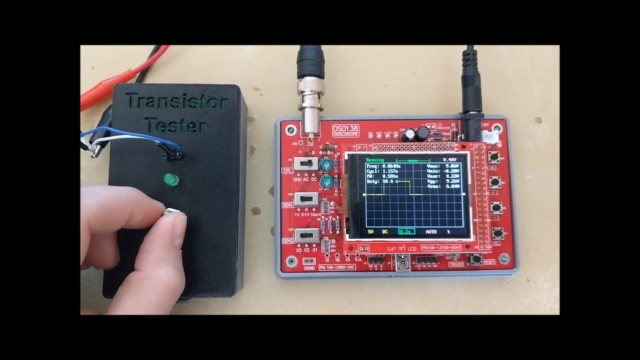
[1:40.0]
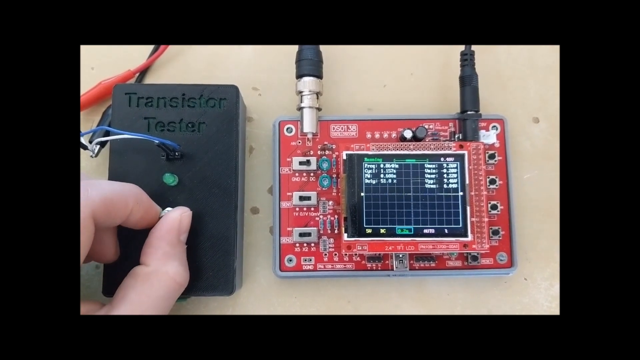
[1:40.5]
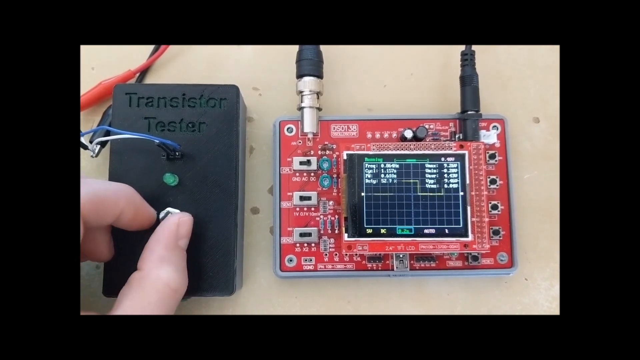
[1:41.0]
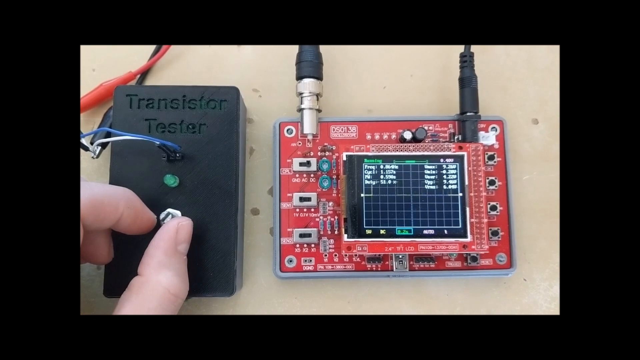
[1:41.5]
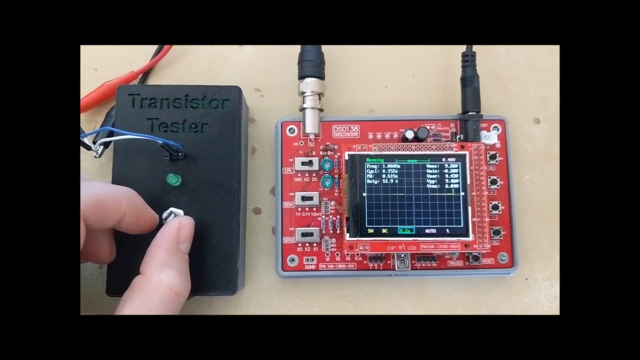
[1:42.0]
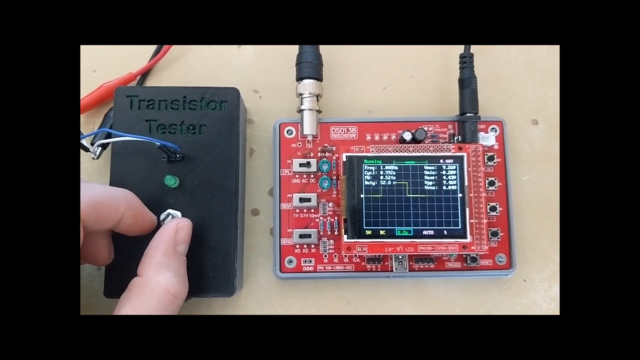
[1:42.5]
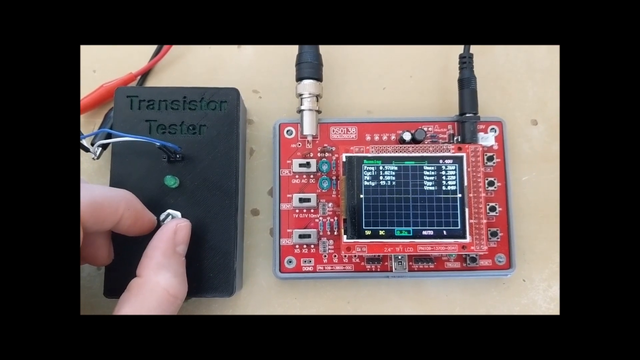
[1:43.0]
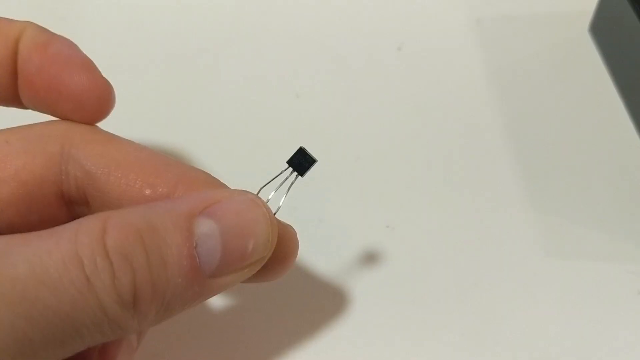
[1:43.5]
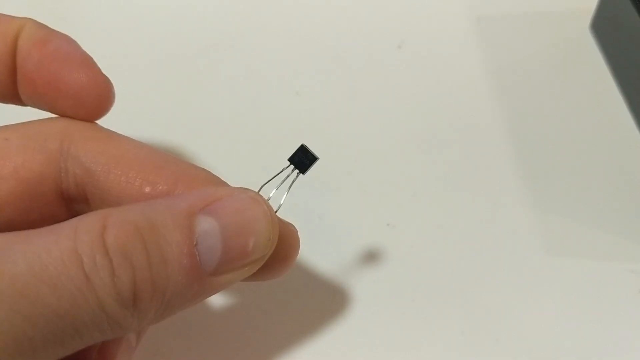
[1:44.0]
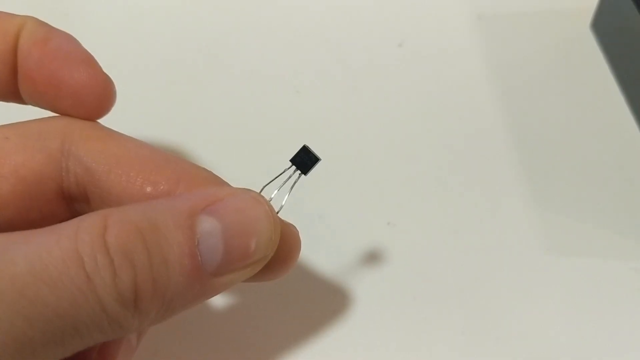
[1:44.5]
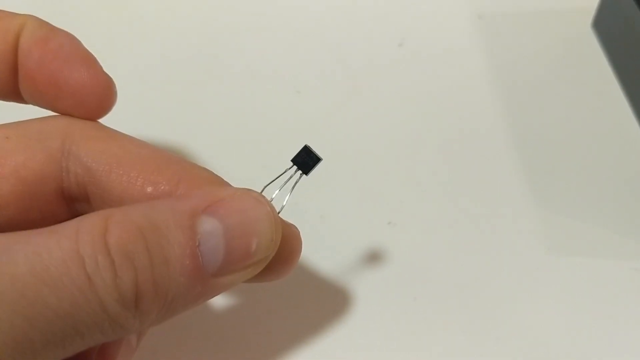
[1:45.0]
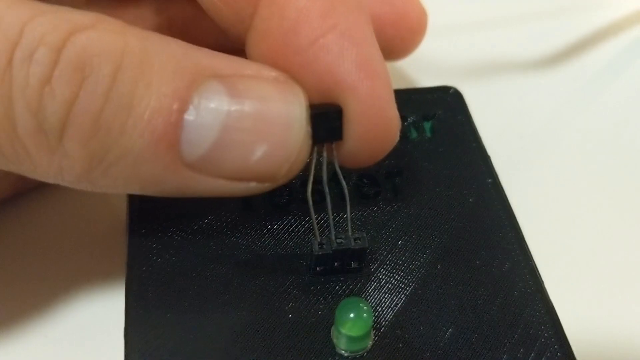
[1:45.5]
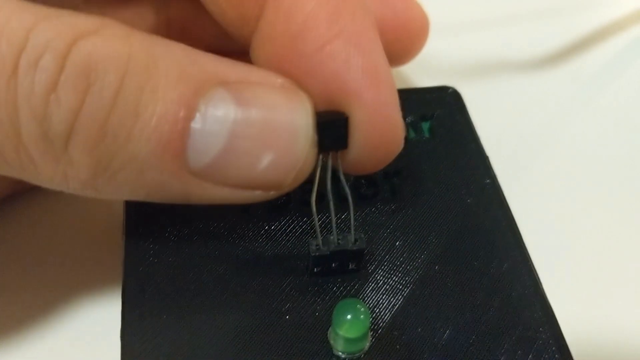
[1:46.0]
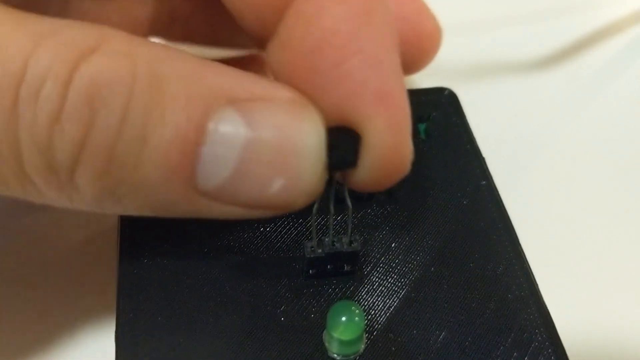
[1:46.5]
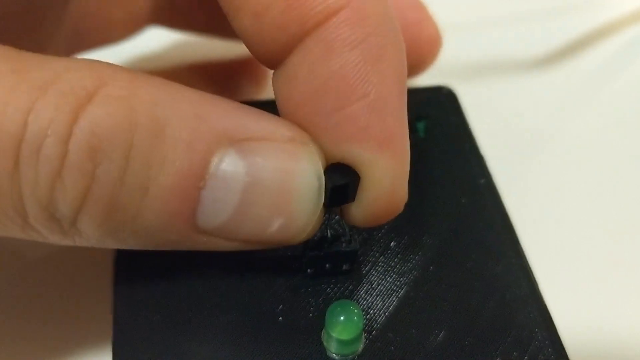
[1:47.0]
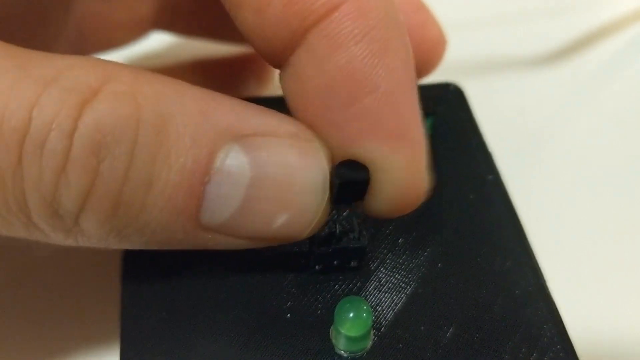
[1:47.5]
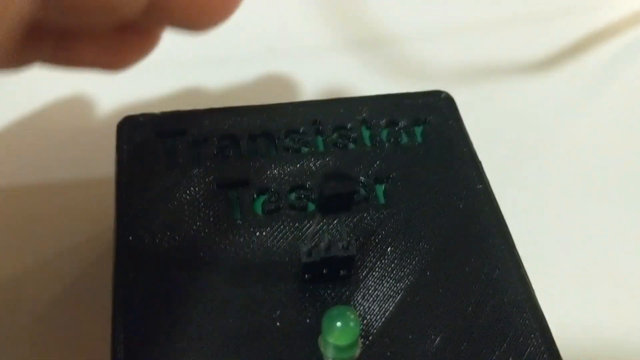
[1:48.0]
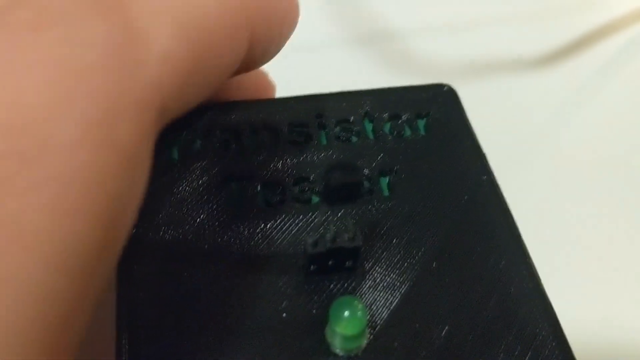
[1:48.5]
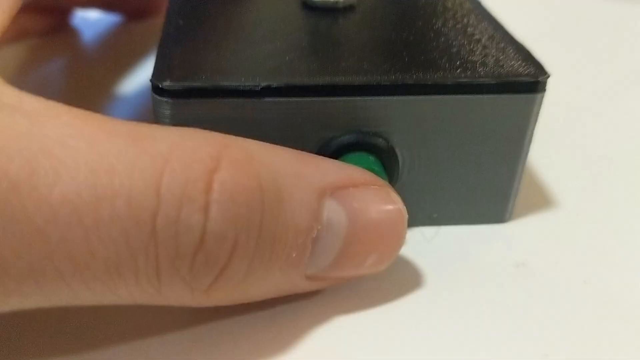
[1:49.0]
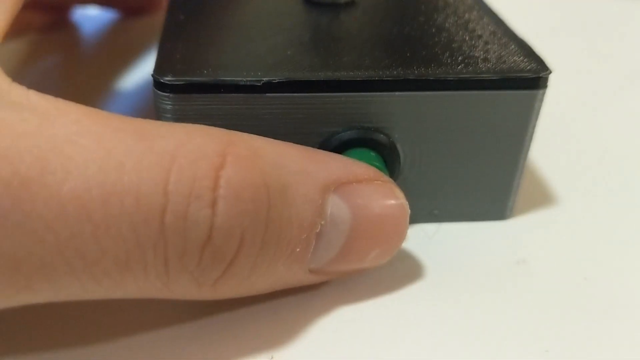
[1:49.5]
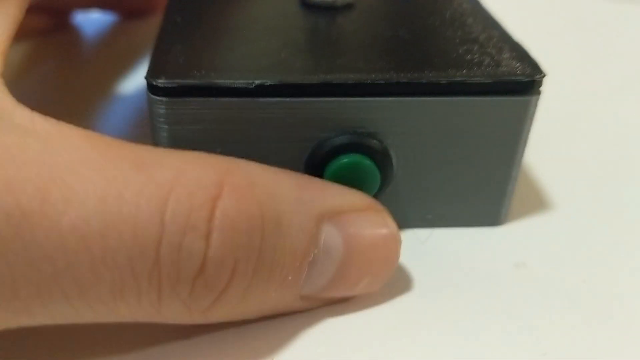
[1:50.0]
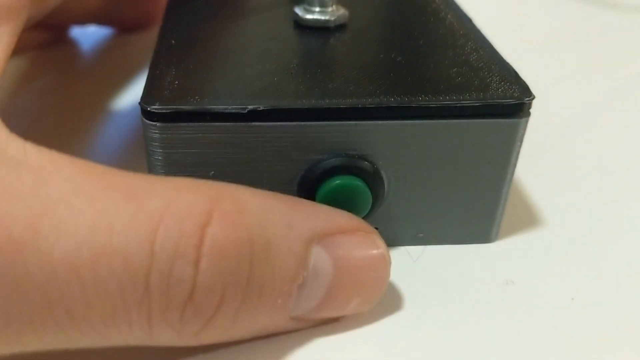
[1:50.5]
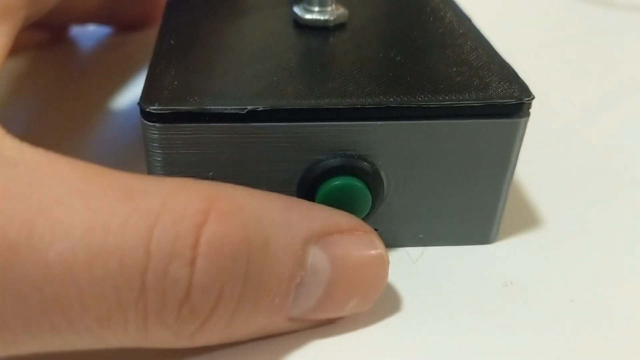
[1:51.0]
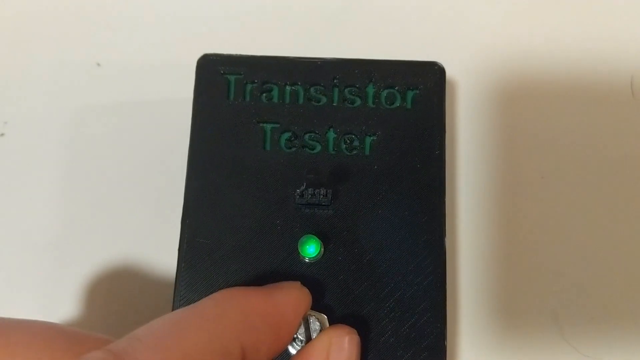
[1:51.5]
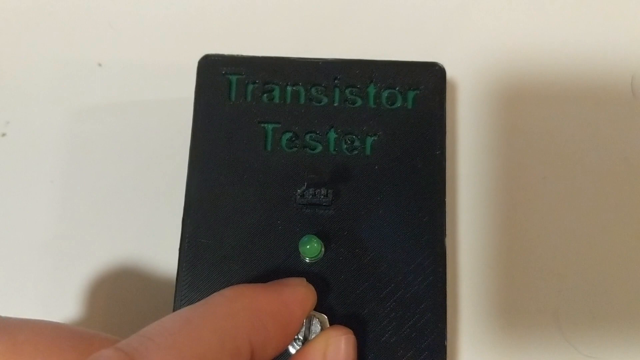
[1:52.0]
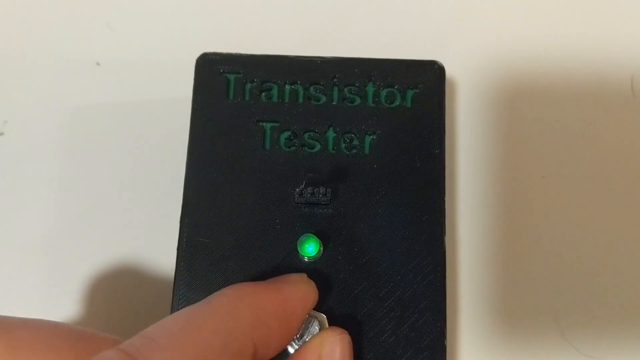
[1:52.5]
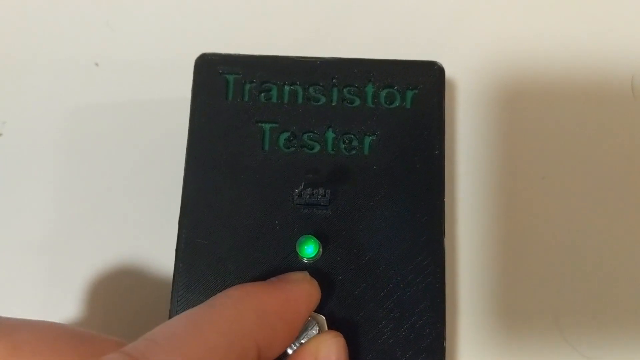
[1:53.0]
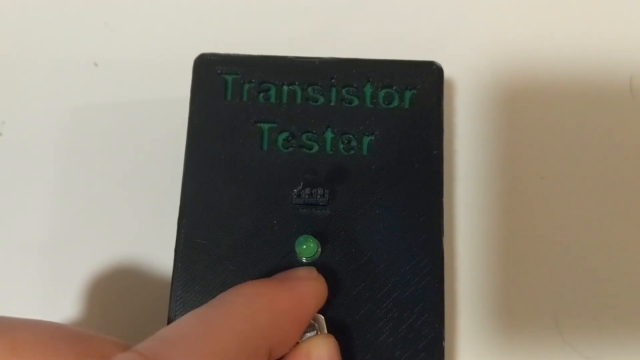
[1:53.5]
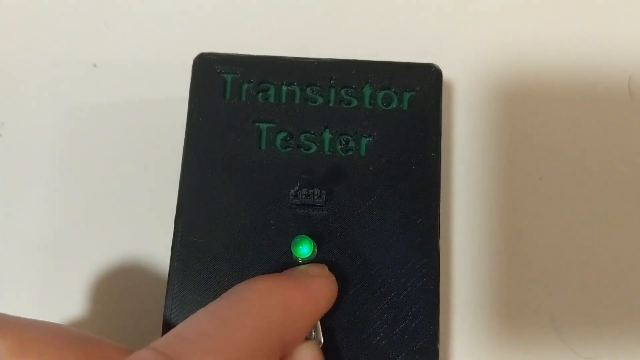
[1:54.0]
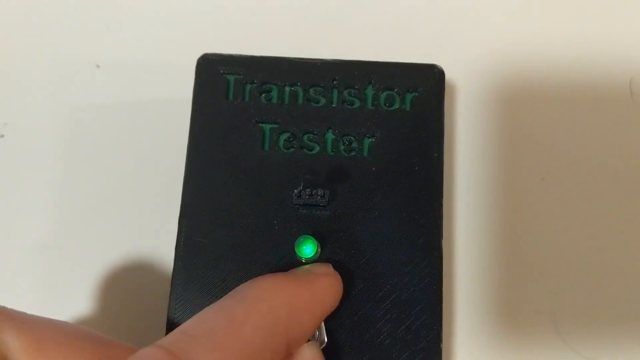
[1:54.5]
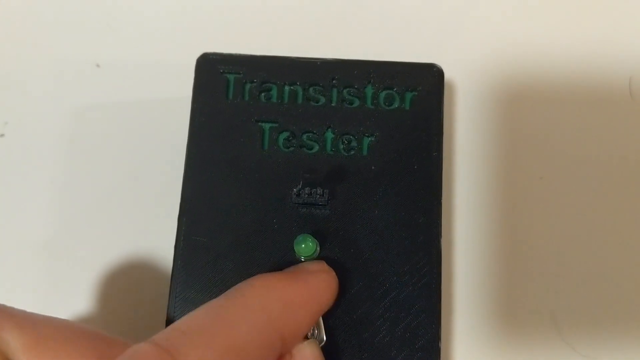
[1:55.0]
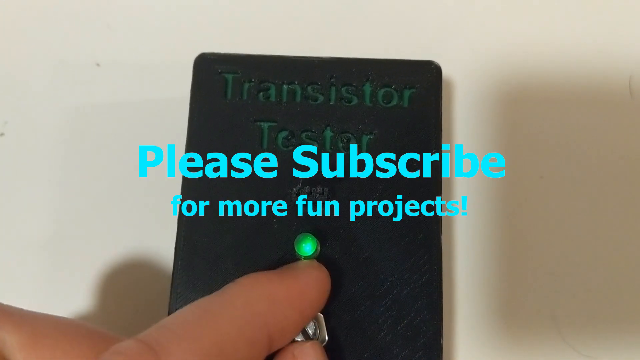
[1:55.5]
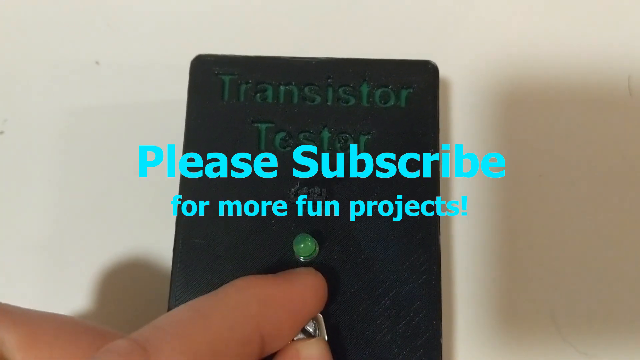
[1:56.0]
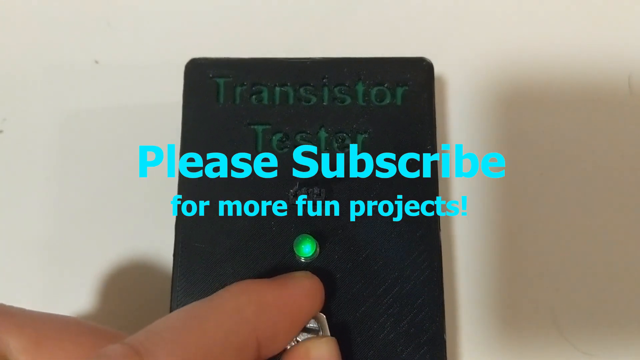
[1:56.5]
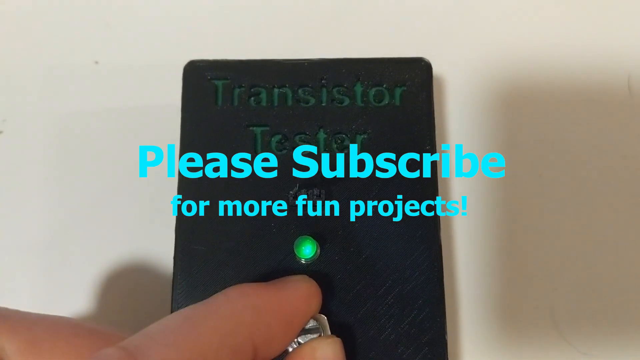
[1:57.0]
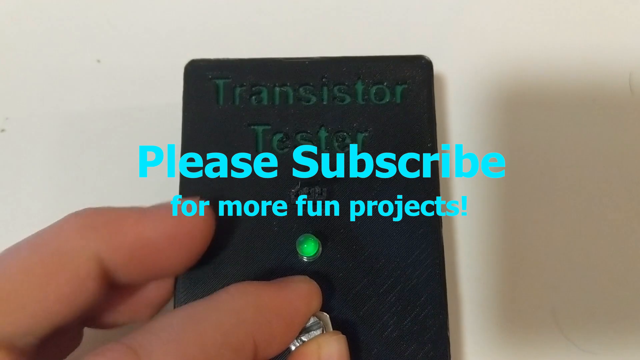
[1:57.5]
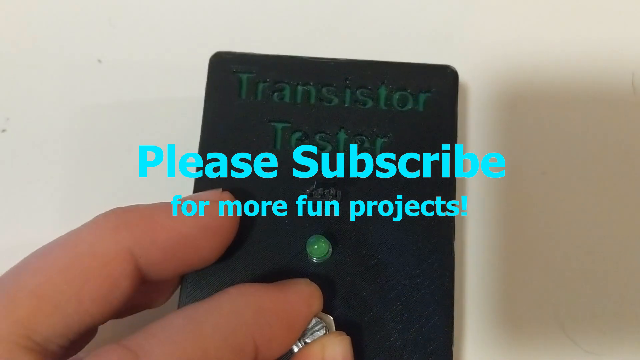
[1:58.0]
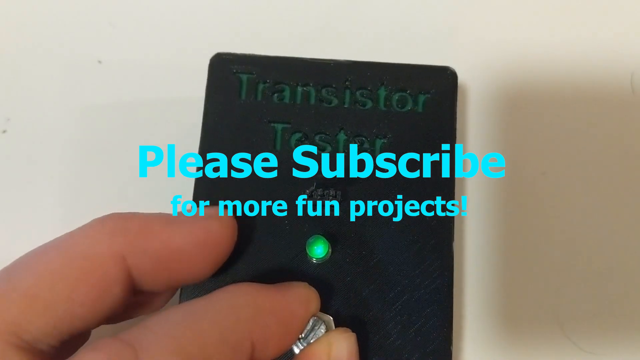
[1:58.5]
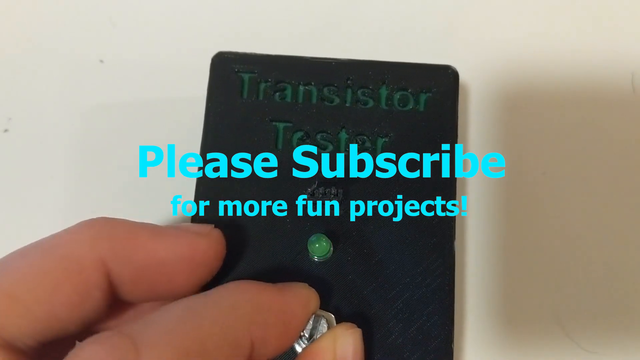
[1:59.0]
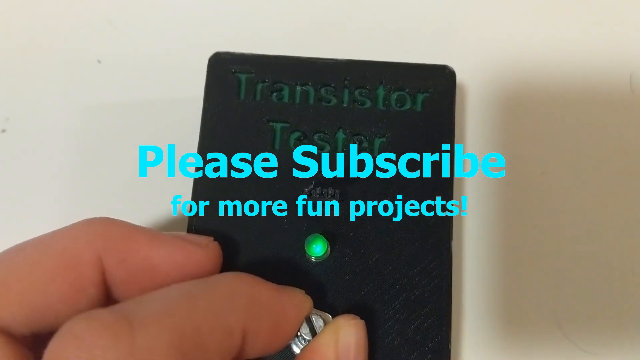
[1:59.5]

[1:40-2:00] A person's hand turns a nut and bolt on the top of a black-looking box that says "transistor tester" on top, and a graph on the side moves as he does so. He then holds a tiny component with a black square on one end and three small silver wires on the other, which he squeezes between his fingers, and pokes it into the device. He pushes a green button on the end, the light lights up, and teal words pop up reading "please subscribe for more fun projects." The person moves his fingers a little, and then the video cuts back to footage from its beginning.